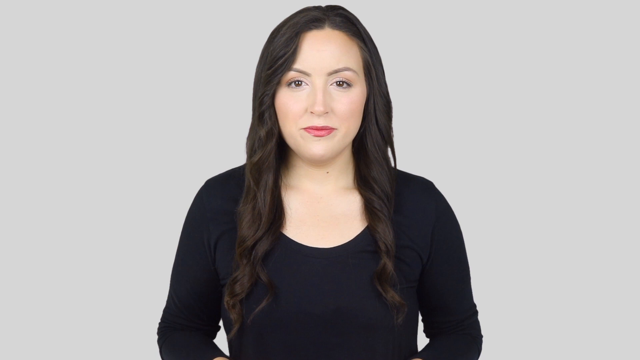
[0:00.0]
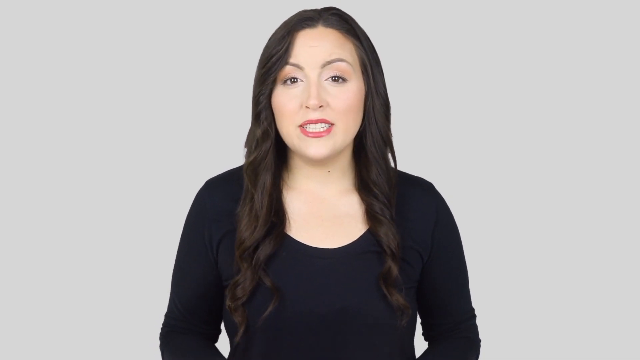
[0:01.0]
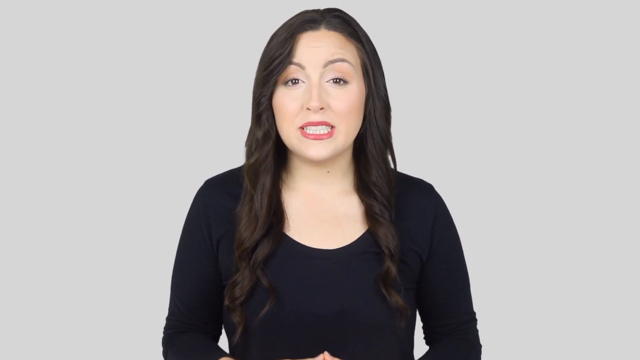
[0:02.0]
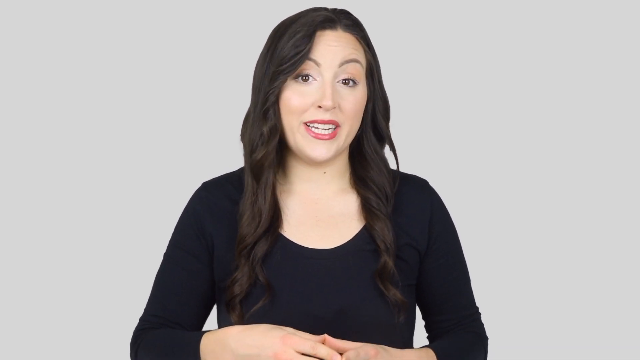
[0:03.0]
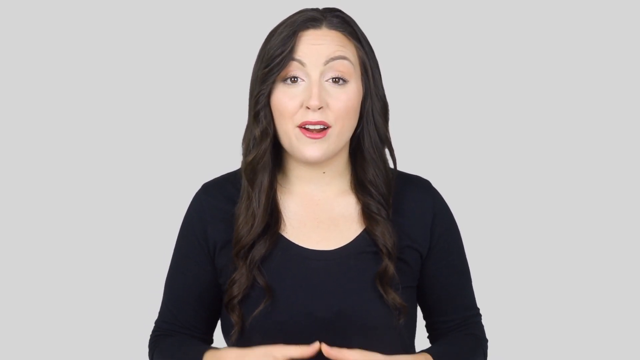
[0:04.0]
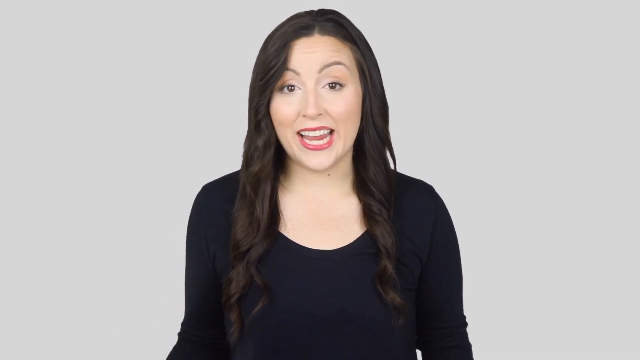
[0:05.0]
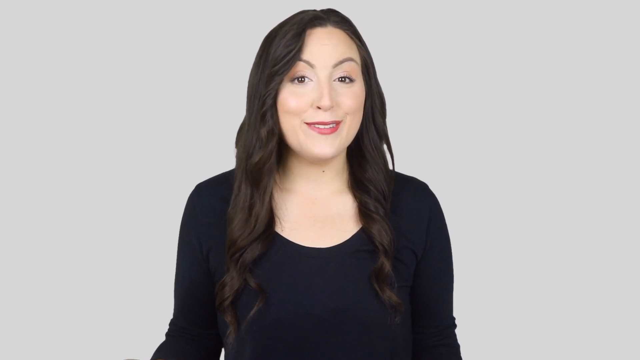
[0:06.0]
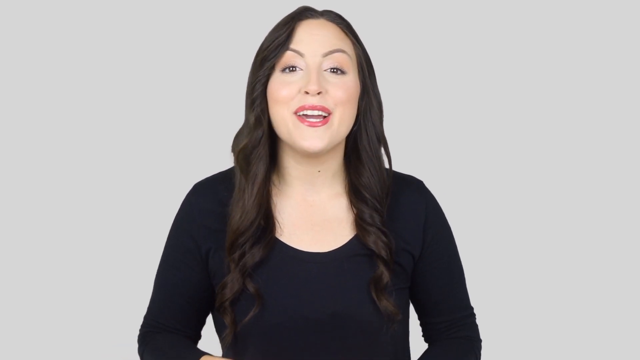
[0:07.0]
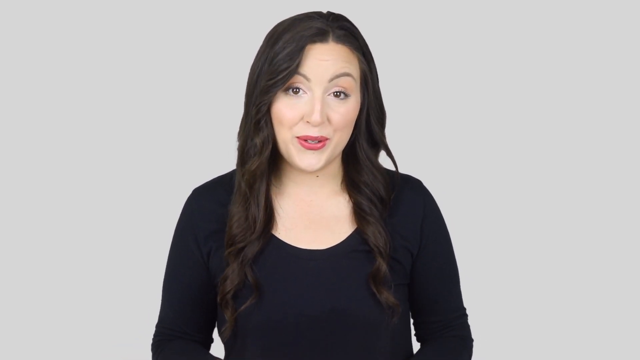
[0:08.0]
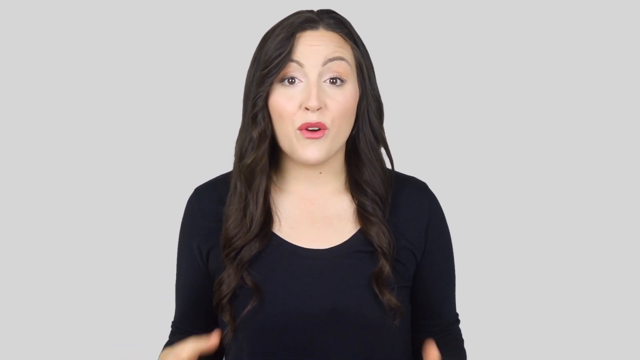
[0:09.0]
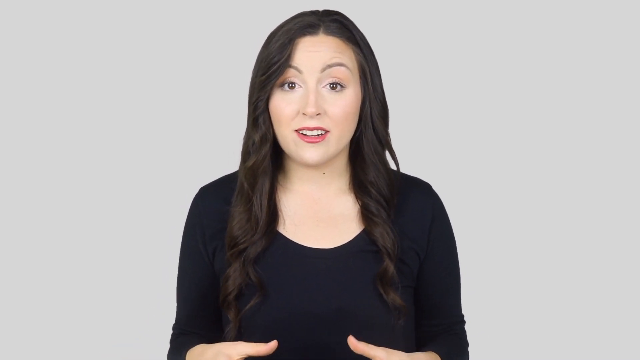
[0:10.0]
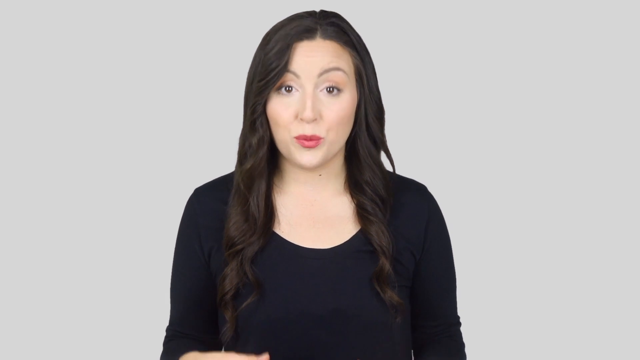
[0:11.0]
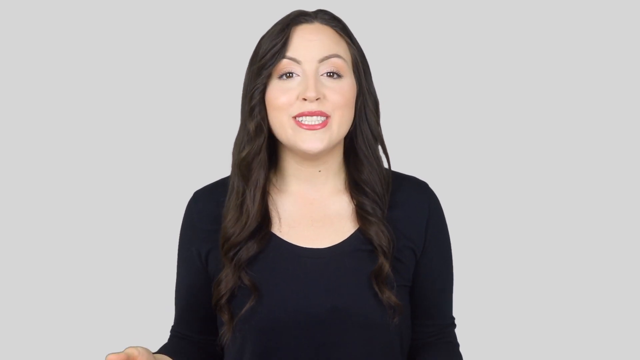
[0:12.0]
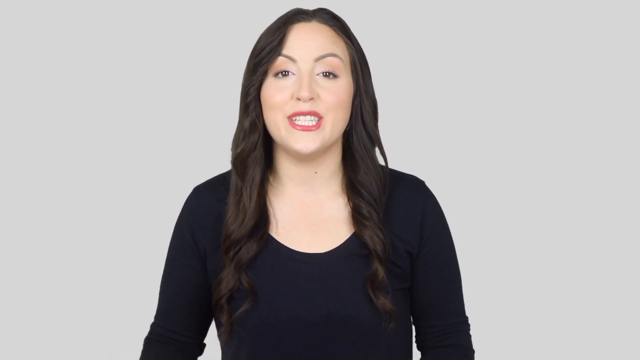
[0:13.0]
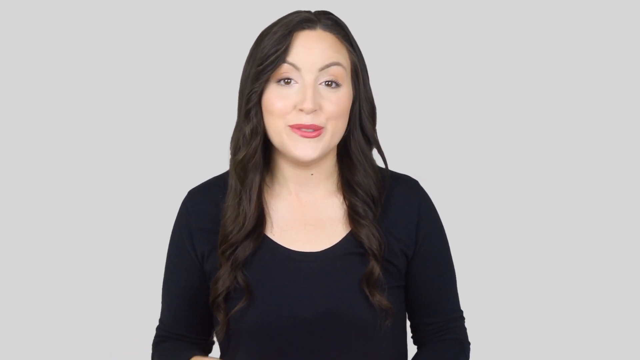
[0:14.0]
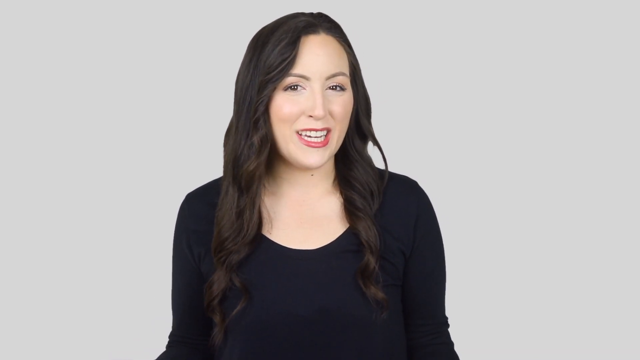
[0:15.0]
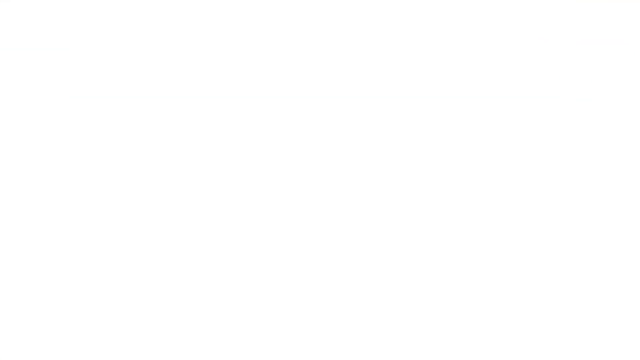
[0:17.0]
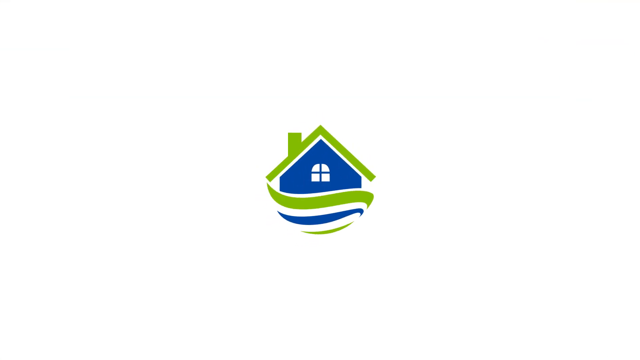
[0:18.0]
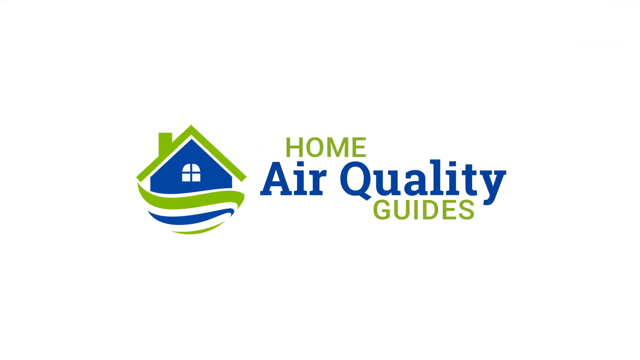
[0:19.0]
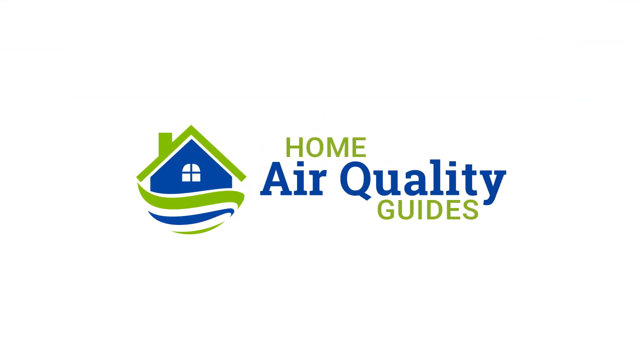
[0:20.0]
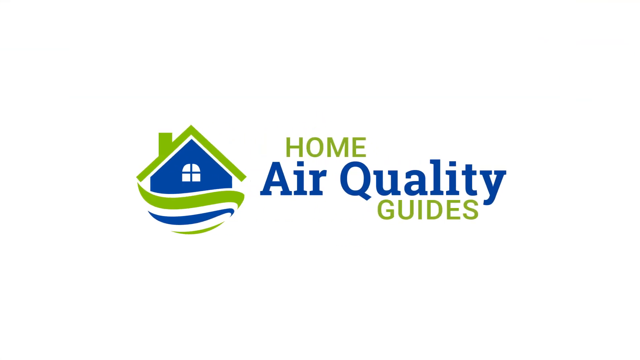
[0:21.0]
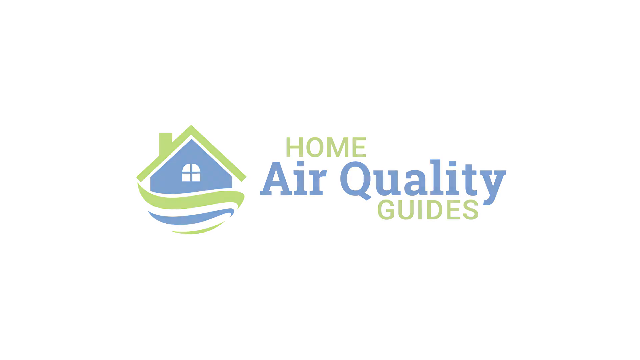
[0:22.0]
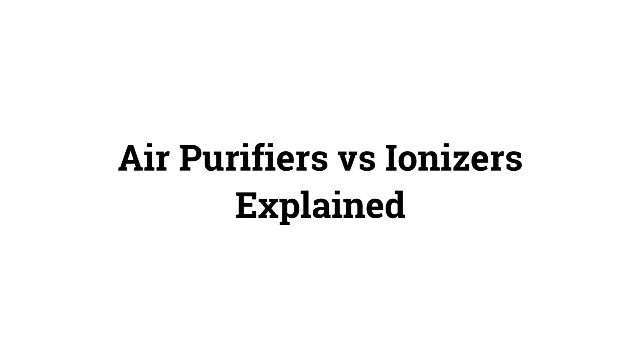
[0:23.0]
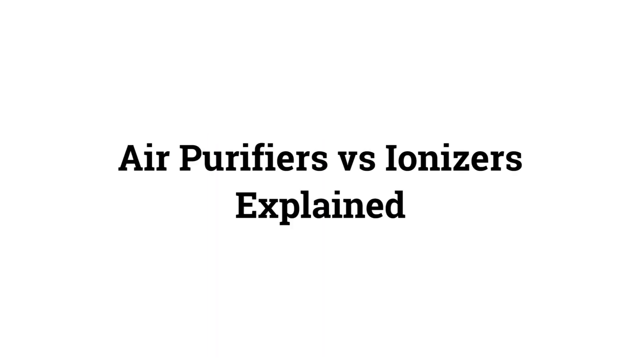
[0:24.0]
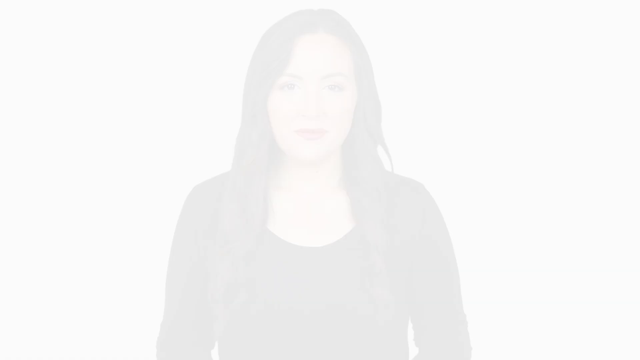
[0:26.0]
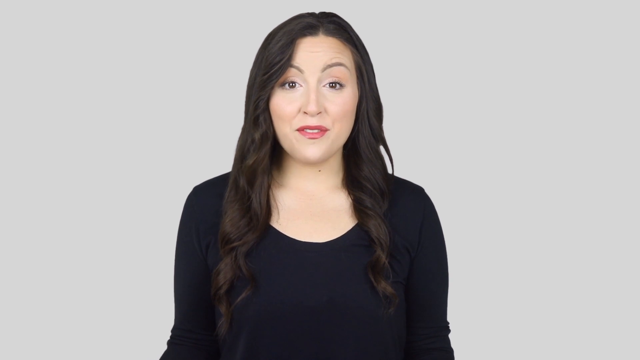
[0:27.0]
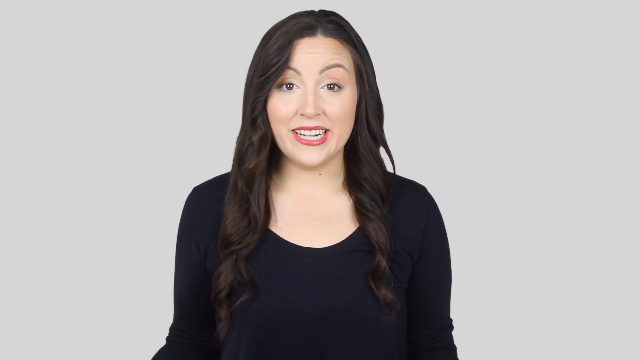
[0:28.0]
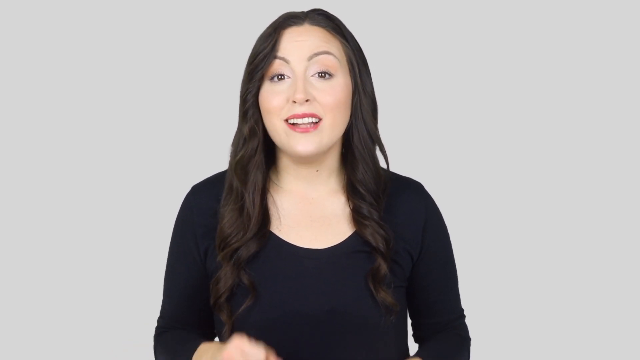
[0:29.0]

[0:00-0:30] A woman with long, dark brown hair curled at the ends stands in front of a light grey wall, seen from about the chest up. She wears a long-sleeved black shirt and minimal makeup: some powder on her face, a little eyeshadow and dark pink lipstick. She speaks to the camera with a large smile, opening her large brown eyes widely and raising her eyebrows as she talks. The screen then changes to a white background with a logo on the left that looks like a blue house with a green roof and green and blue wavy lines underneath; next to it the text reads "Home air quality guides", with "home" and "guides" in green and "air quality" in blue. The next screen is a plain white background with large black text in the center: "Air purifiers vs. ionizers explained". The video then returns to the woman as she continues speaking to the camera.